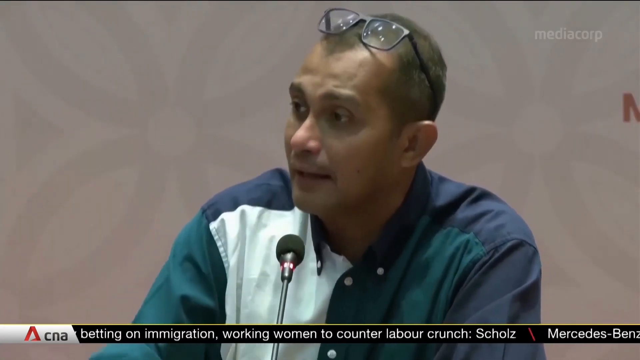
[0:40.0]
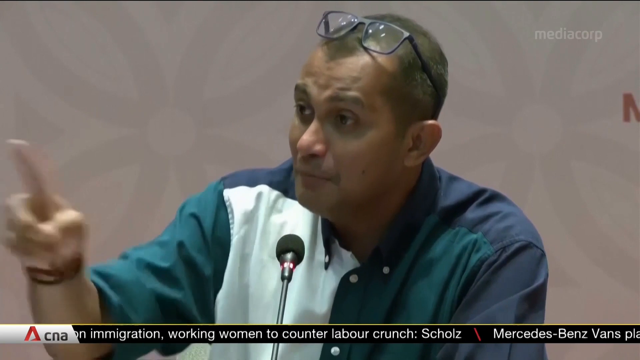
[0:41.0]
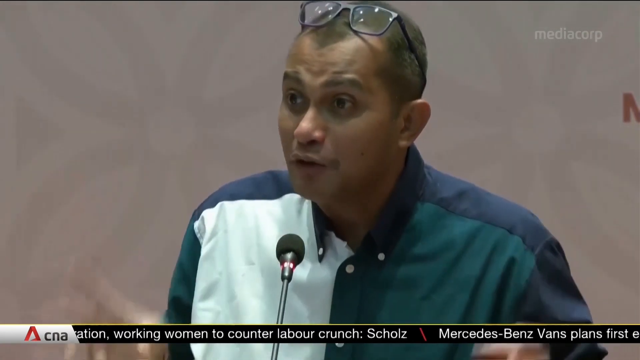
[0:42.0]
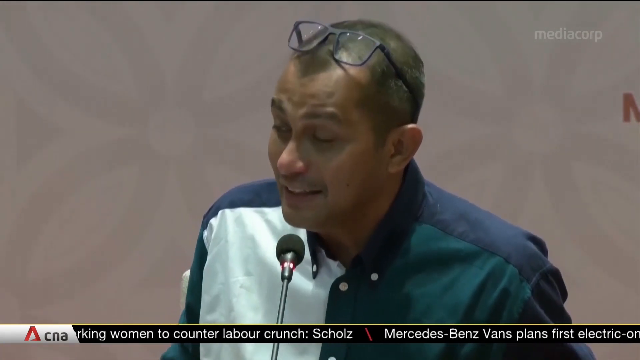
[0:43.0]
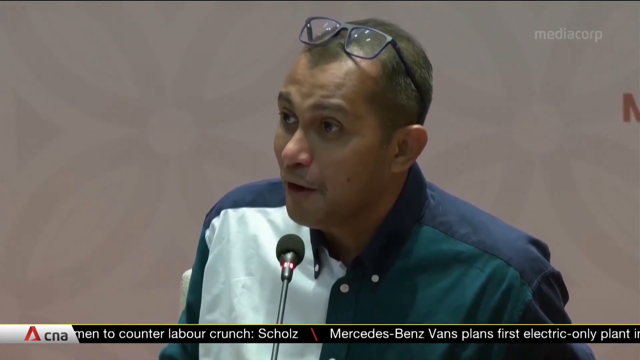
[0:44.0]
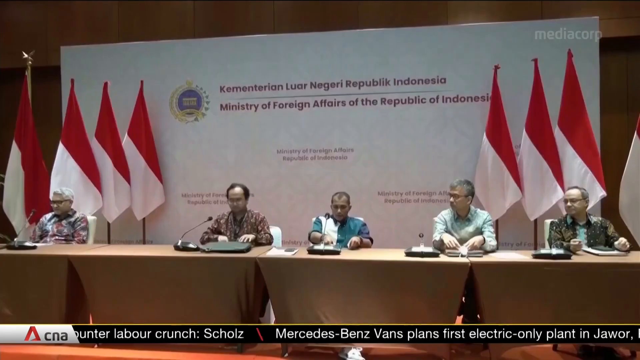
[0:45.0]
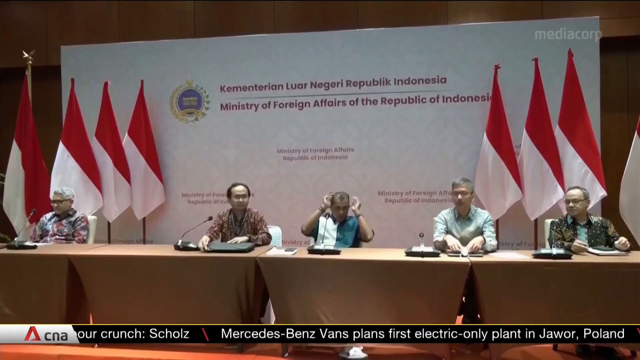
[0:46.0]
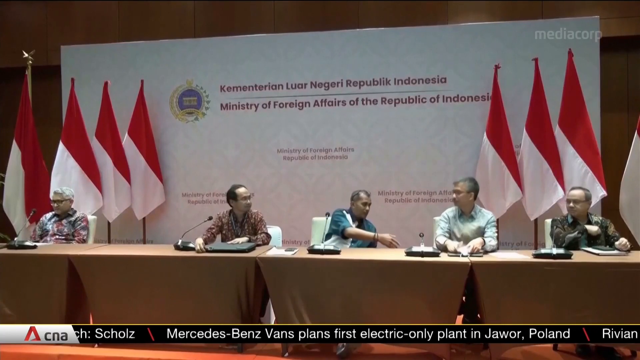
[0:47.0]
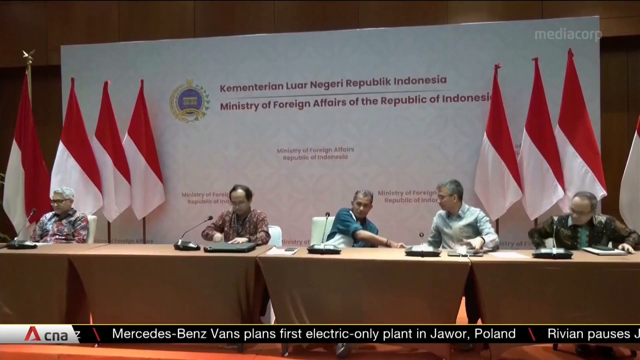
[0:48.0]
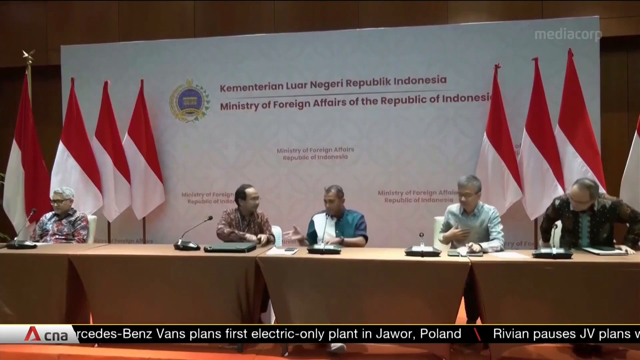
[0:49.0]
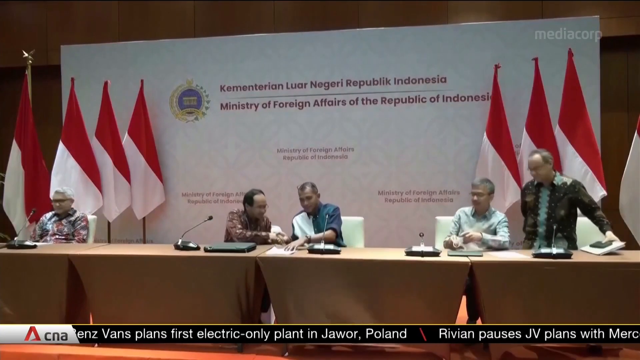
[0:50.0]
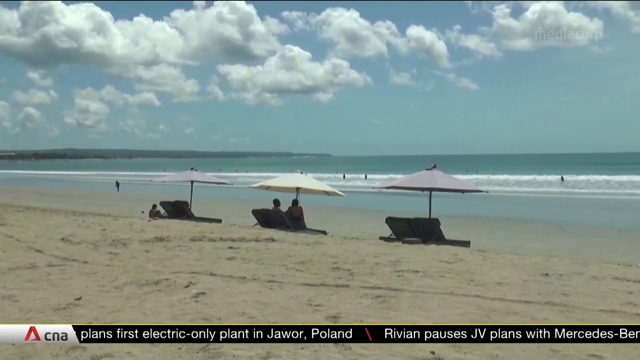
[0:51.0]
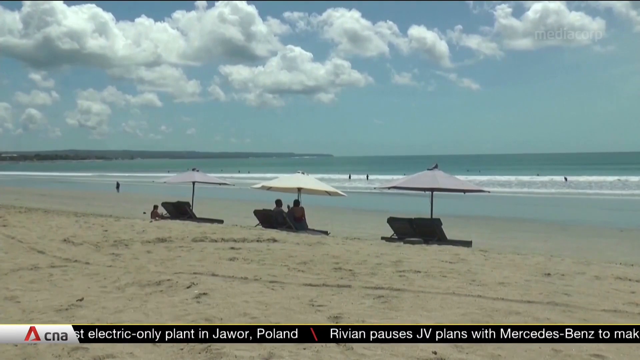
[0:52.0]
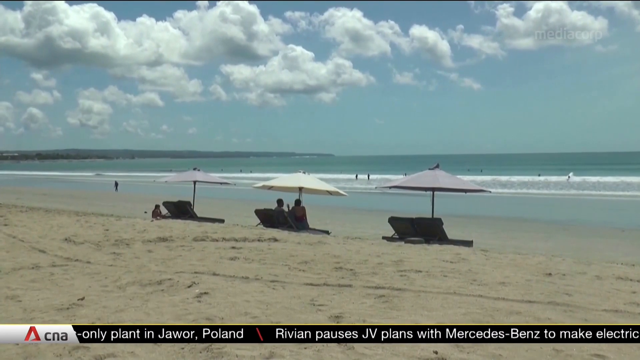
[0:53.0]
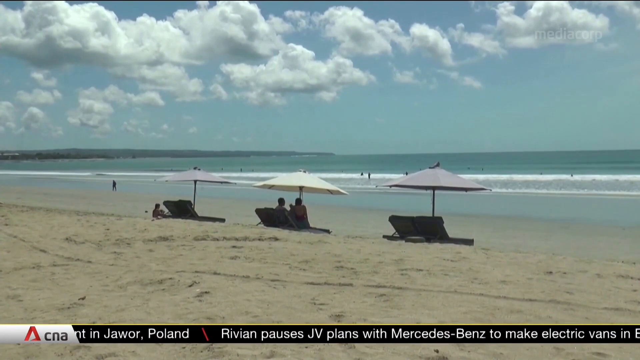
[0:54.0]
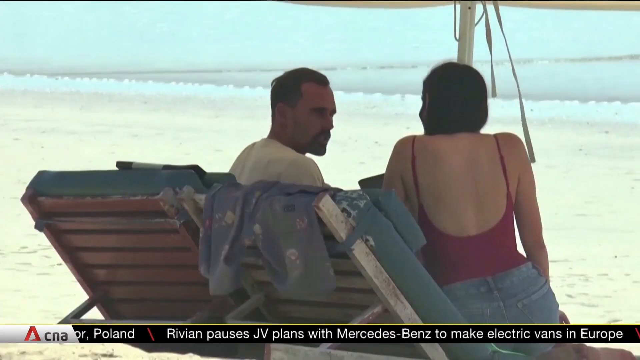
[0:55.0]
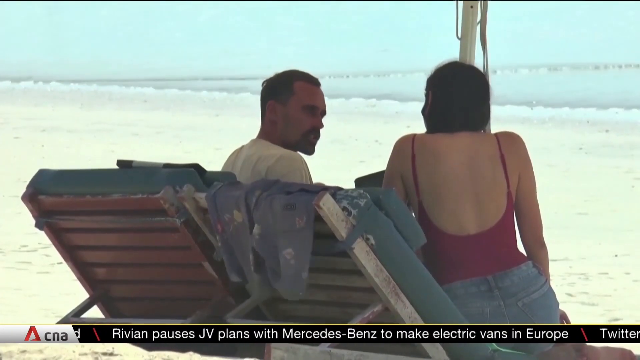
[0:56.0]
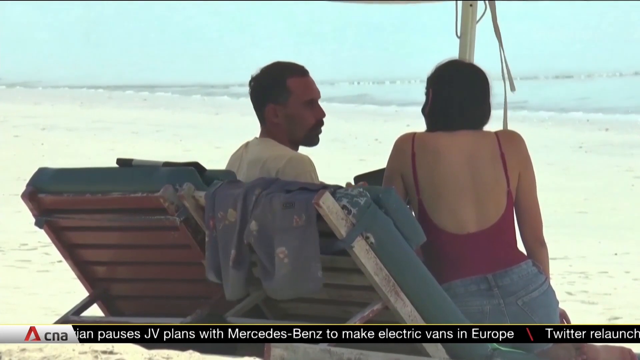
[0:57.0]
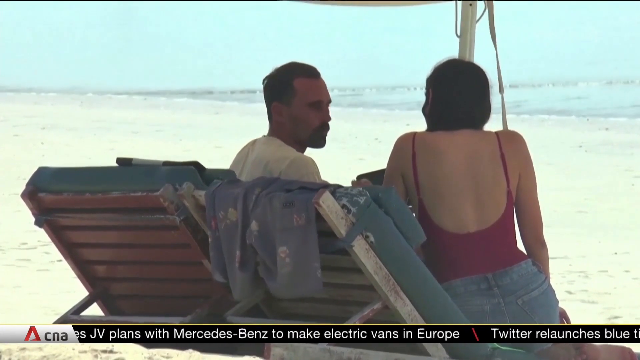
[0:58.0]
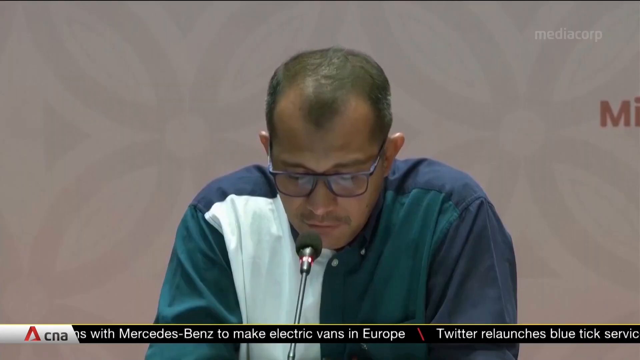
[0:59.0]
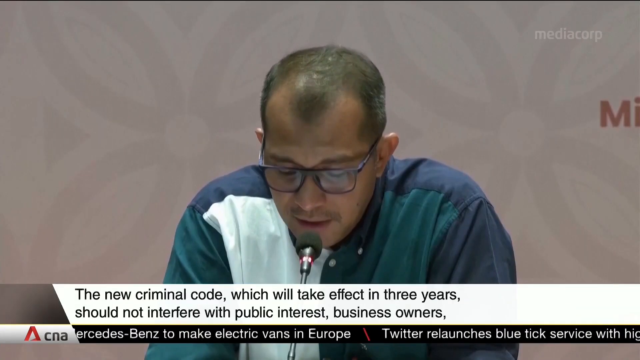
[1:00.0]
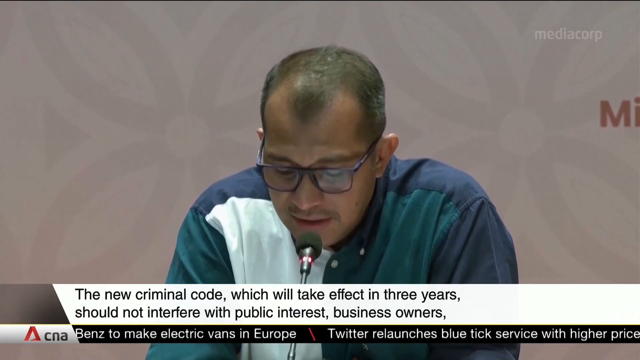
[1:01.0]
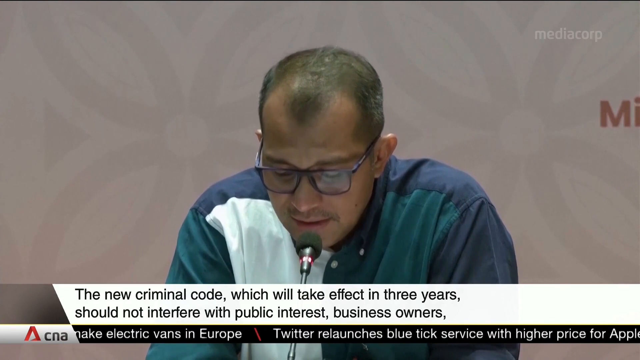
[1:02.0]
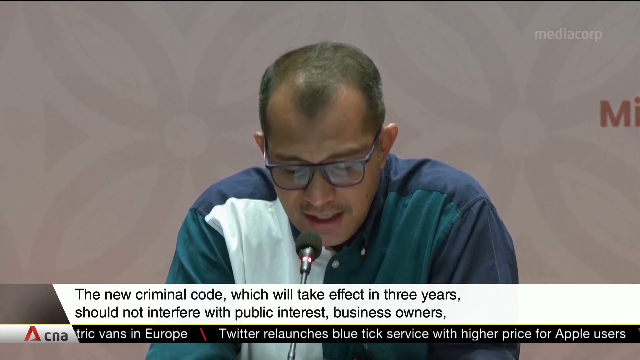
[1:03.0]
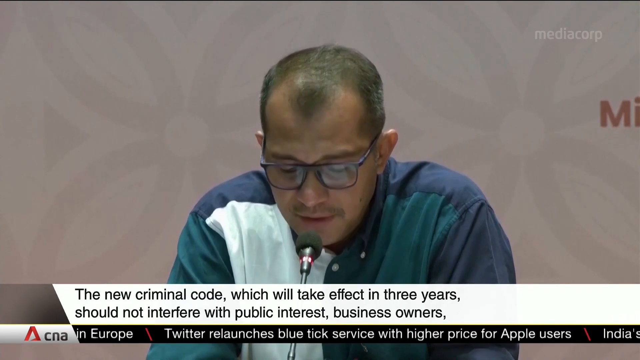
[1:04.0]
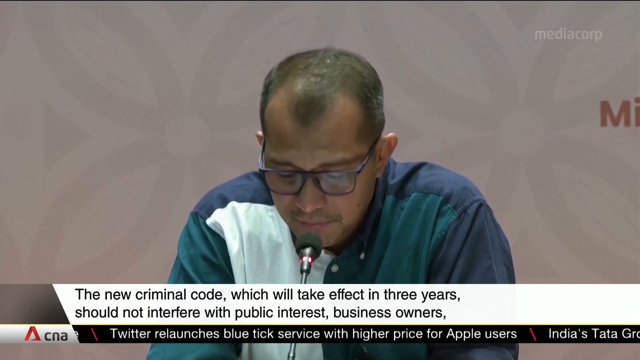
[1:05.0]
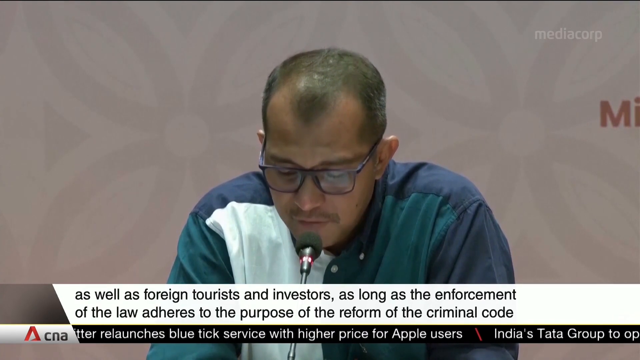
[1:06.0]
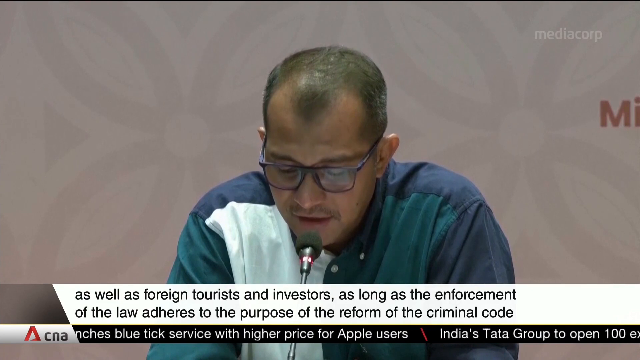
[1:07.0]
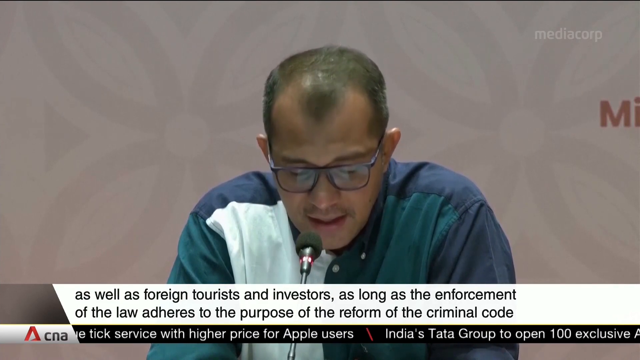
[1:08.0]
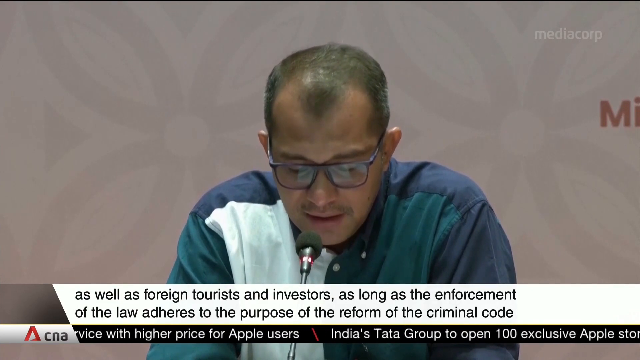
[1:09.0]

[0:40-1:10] The man with glasses on top of his head speaks to the five-person committee. The scene changes to a beach with clouds, where two people are sitting on the beach beside a very bright blue ocean. Two people are then shown under an umbrella: a woman in a red bathing suit sitting in a chair and a man sitting in another chair, in two lounge chairs with the umbrella over them. Text reads "as well as foreign tourists and investors, as long as the enforcement law adheres to the purpose of the reform of the criminal code." Words are placed along the bottom of the screen. The beach has tan sand and white clouds in the sky, and about five people play in the water near the waves, where the foamy white water meets aqua blue.